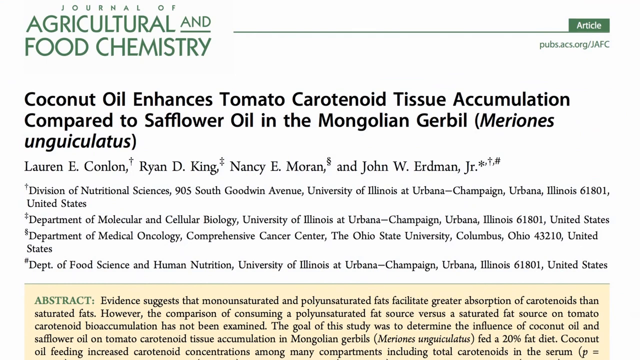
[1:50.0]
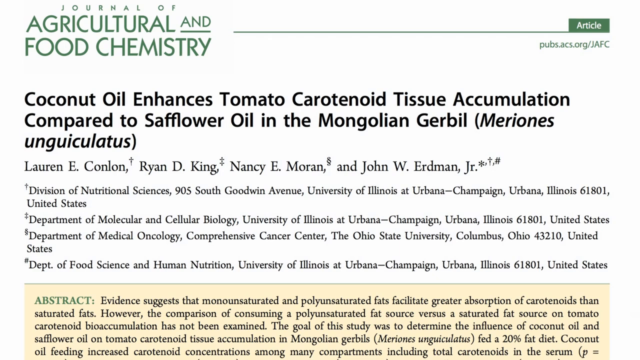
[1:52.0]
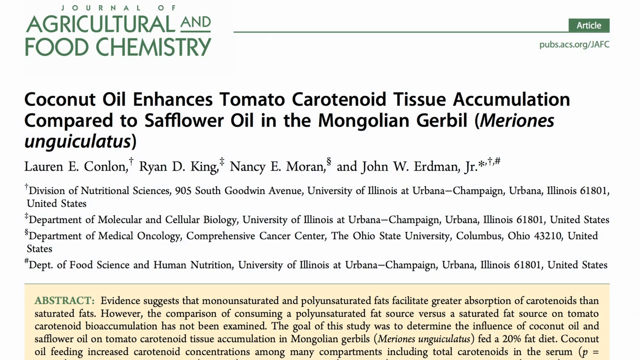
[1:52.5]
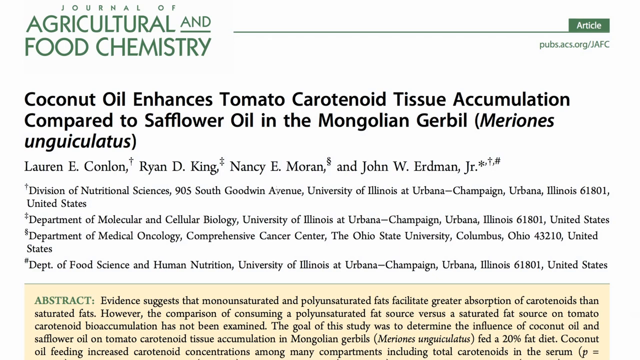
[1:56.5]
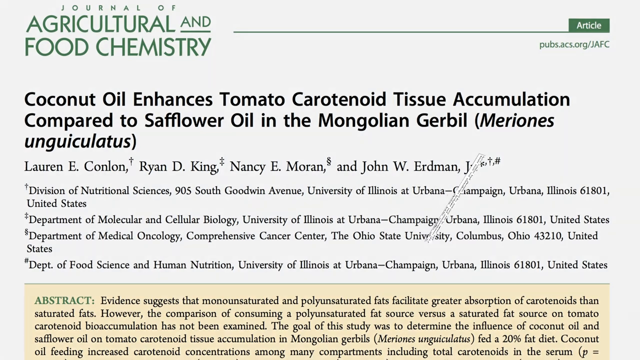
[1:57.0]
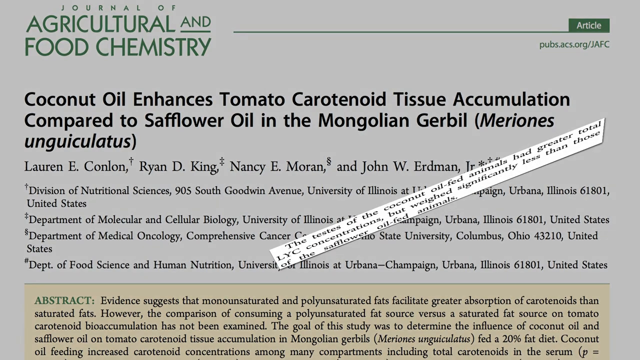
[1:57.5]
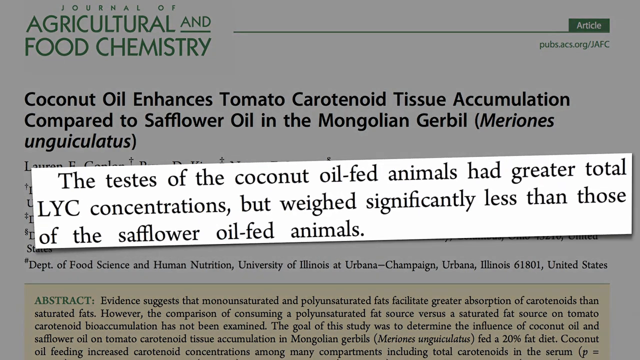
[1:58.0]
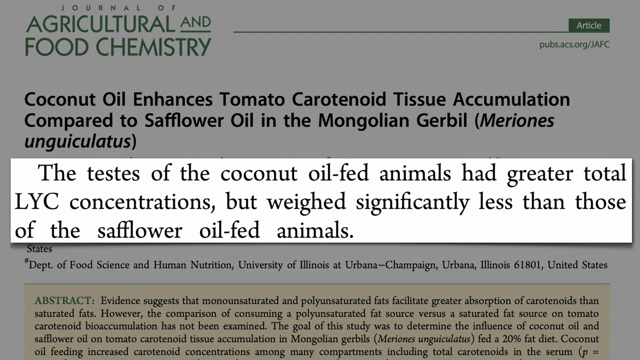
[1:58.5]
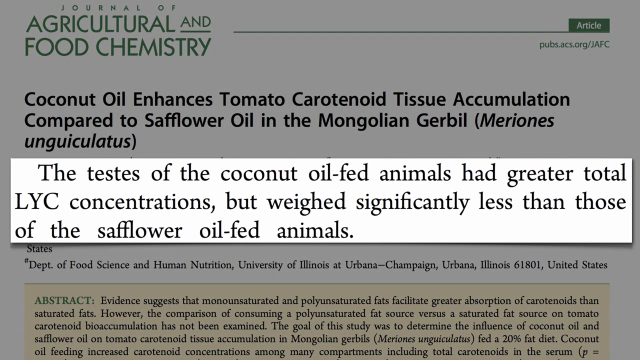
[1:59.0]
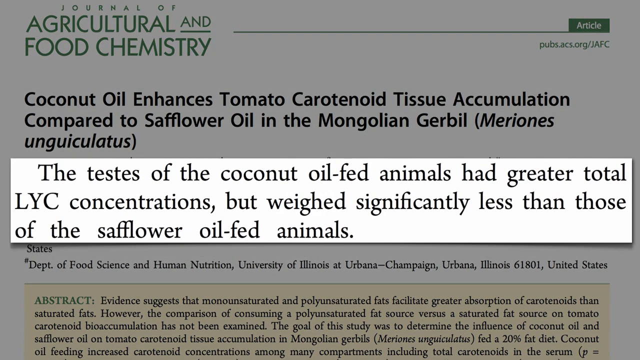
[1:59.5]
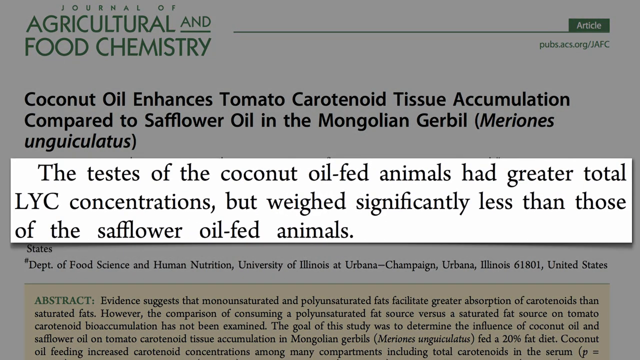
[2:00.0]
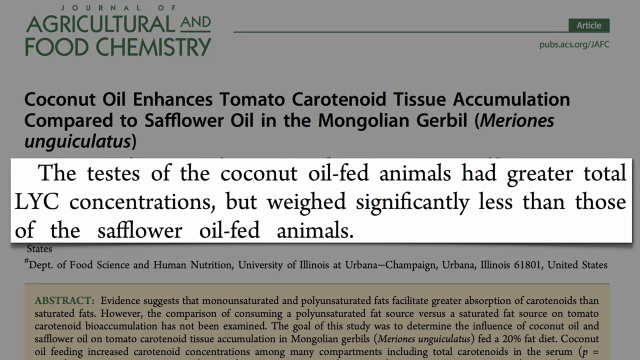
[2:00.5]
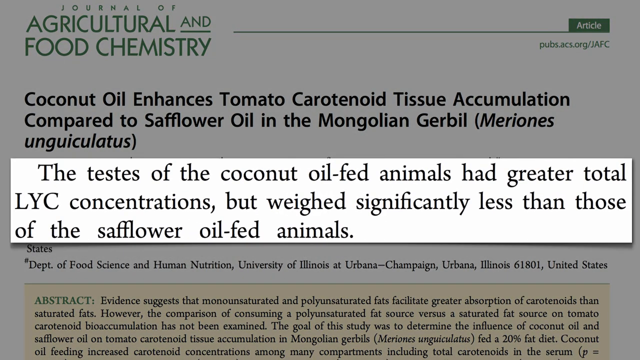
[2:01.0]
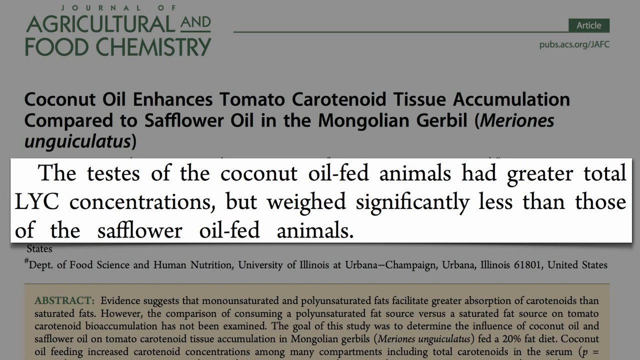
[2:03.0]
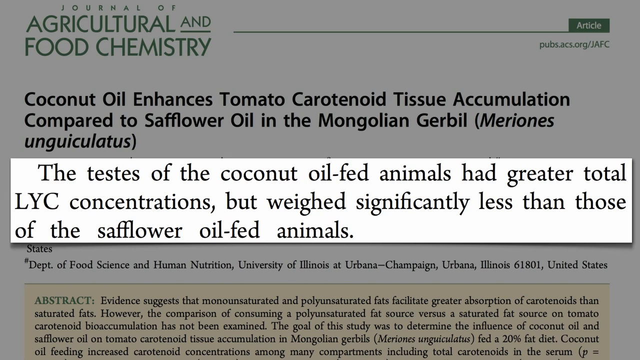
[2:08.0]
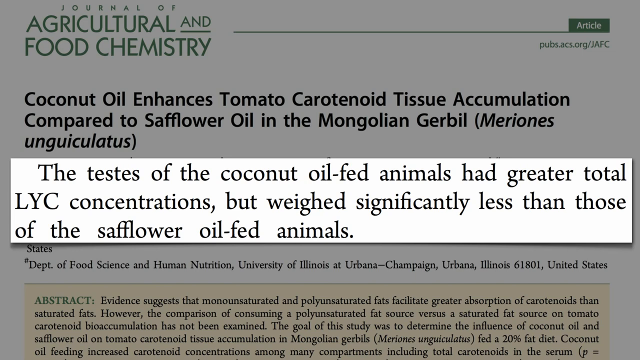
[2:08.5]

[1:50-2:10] A slide shows an article from the Journal of the Agricultural and Food Chemistry, with the journal logo at the very top left. Underneath is a bold heading, "coconut oil enhances tomato carotenoid tissue accumulation compared to safflower oil in the Mongolian gerbil", followed by a list of the researchers and a list of the departments and universities they are affiliated with. At the bottom of the screen is a yellow text box with the green word "abstract" and then black text reading "evidence suggests that monounsaturated and polyunsaturated fats facilitate greater absorption of carotenoids than saturated fats. However, the comparison of consuming a polyunsaturated fat source versus a saturated fat source on tomato carotenoid bioaccumulation has not been examined. The goal of this study was to determine the influence of coconut oil and safflower oil on tomato carotenoid tissue accumulation in Mongolian gerbils who have been fed a 20% fat diet." The text then disappears off the screen.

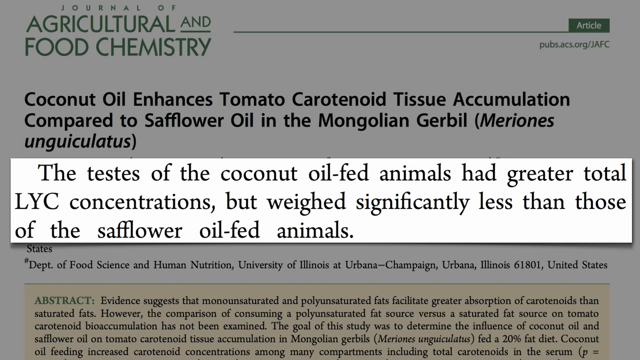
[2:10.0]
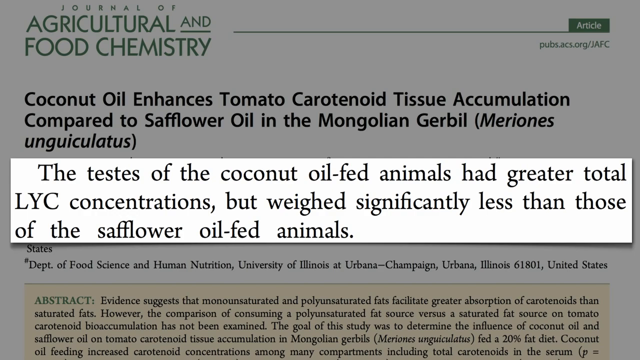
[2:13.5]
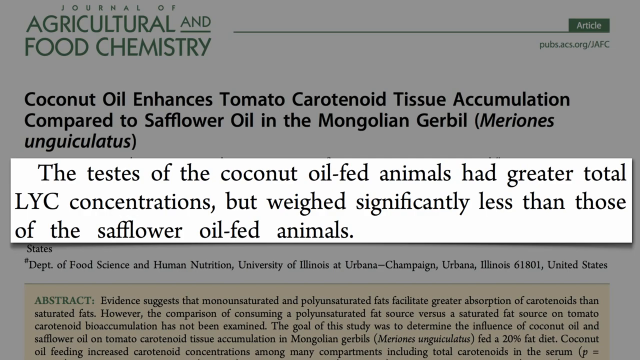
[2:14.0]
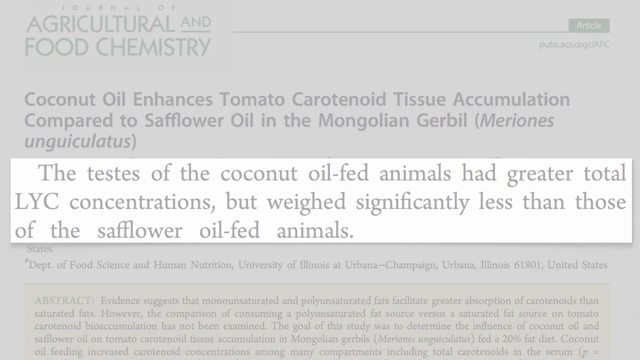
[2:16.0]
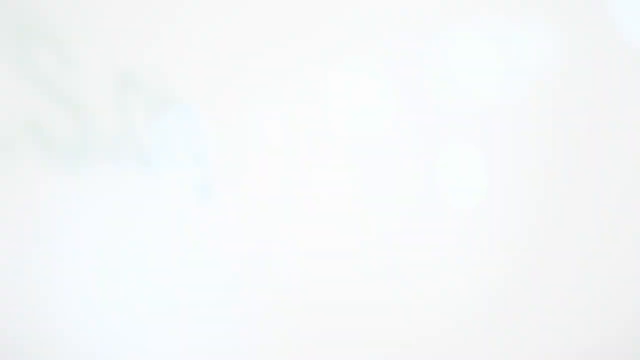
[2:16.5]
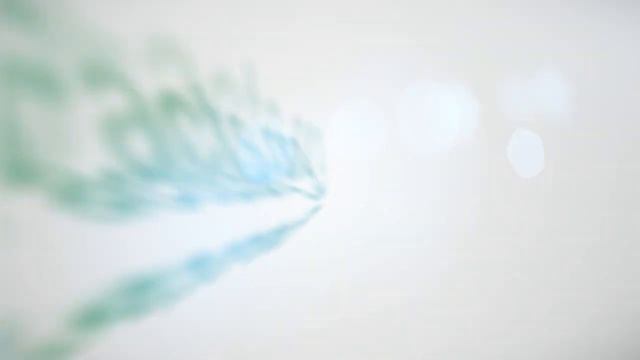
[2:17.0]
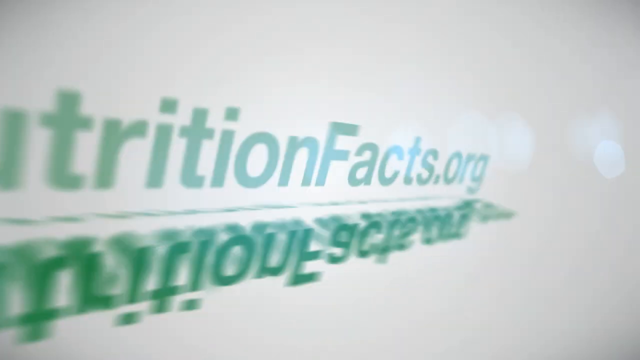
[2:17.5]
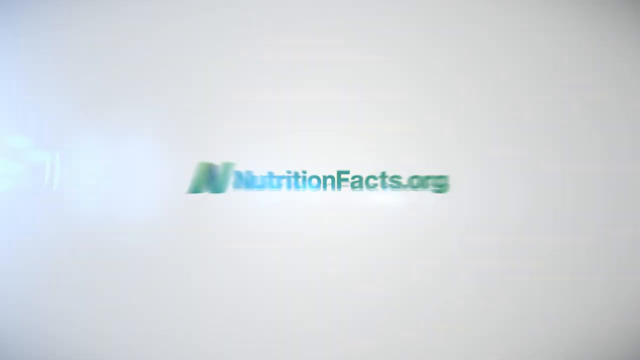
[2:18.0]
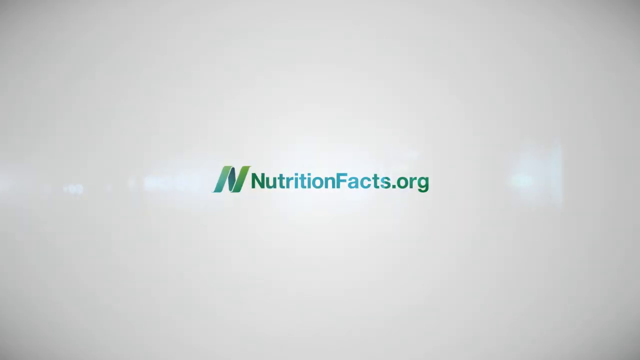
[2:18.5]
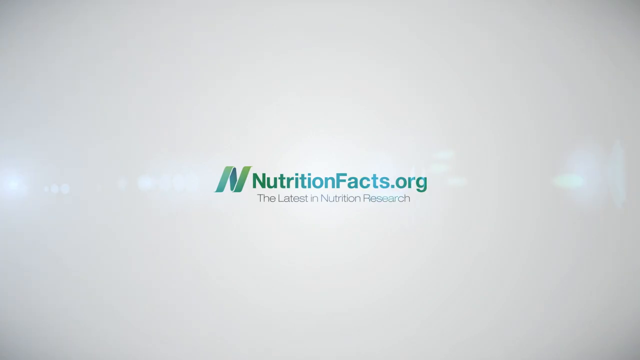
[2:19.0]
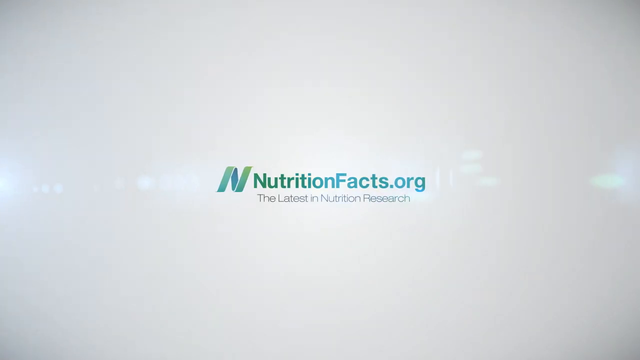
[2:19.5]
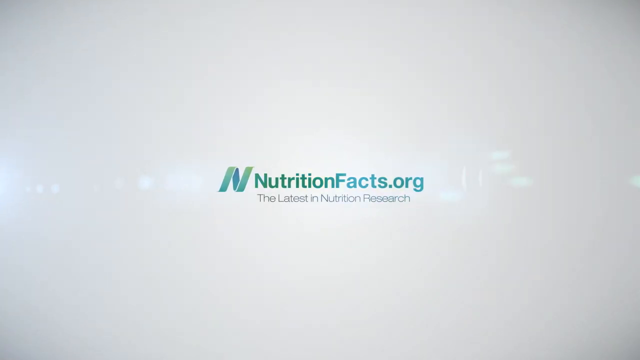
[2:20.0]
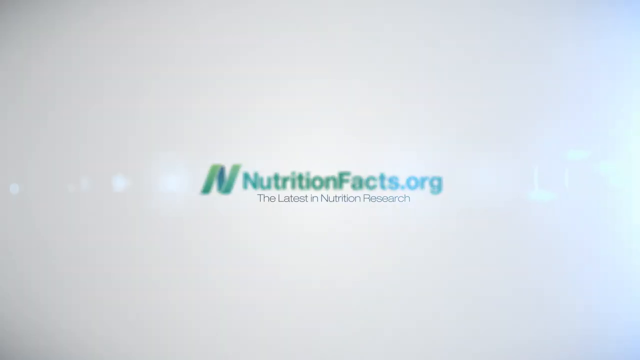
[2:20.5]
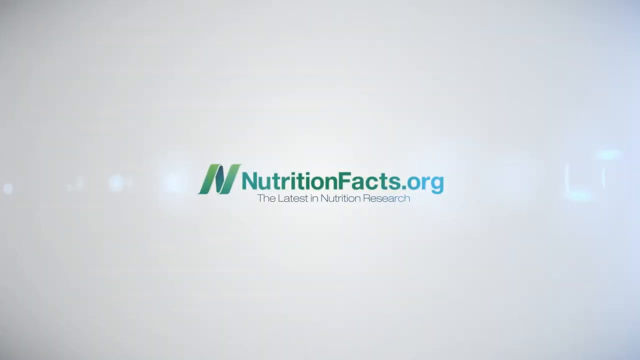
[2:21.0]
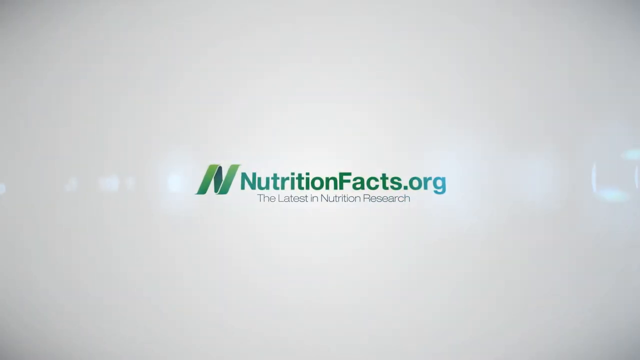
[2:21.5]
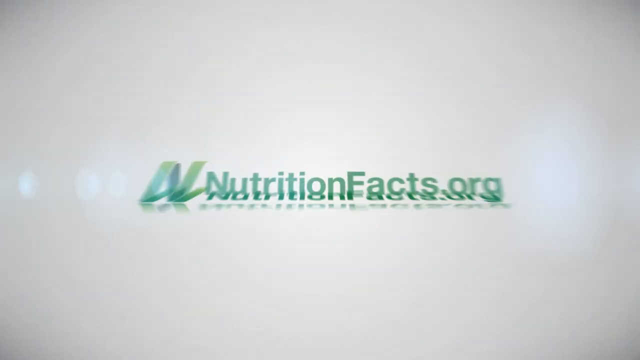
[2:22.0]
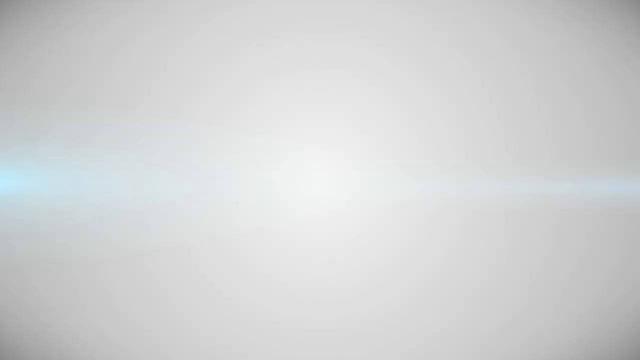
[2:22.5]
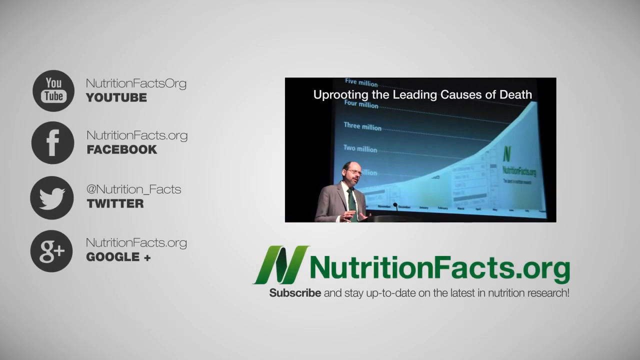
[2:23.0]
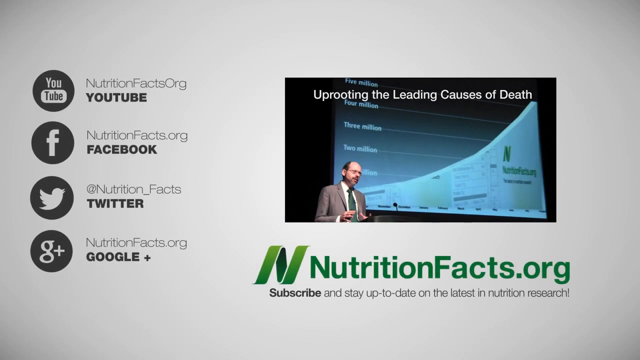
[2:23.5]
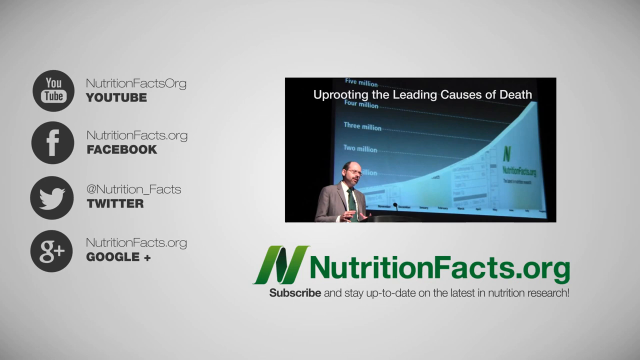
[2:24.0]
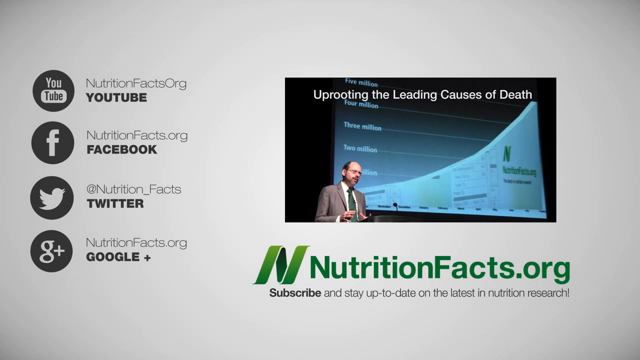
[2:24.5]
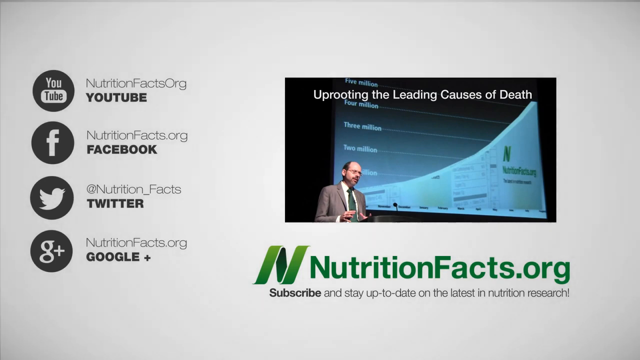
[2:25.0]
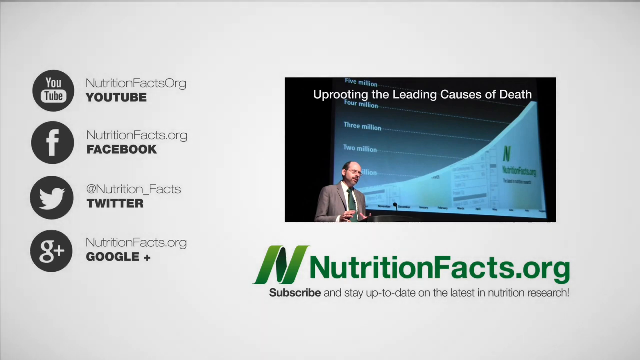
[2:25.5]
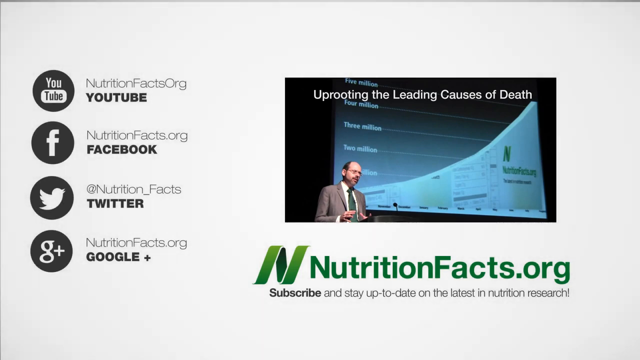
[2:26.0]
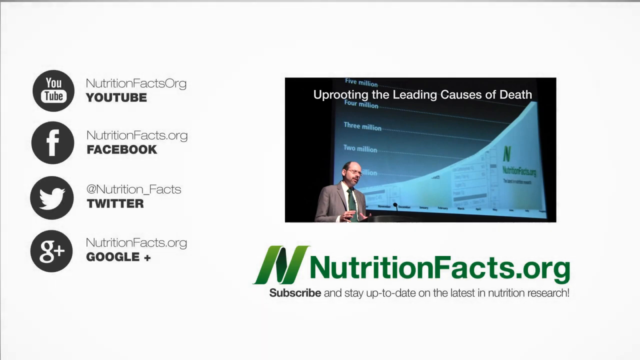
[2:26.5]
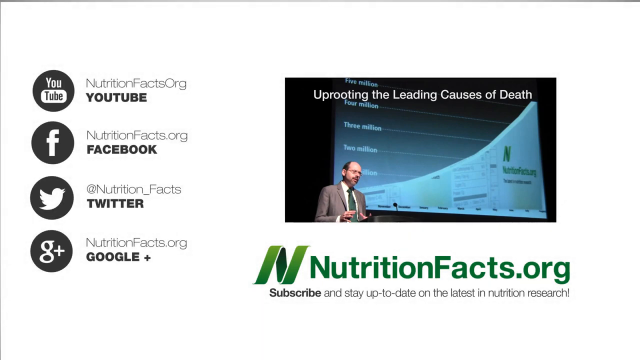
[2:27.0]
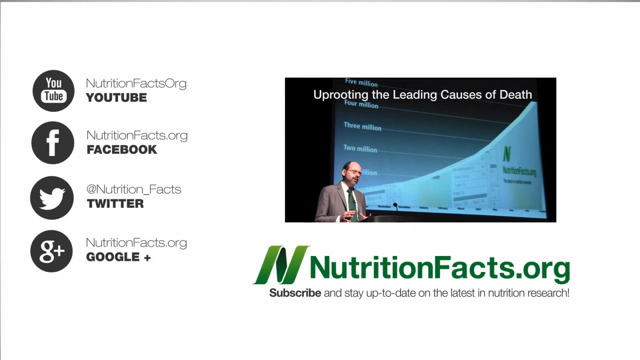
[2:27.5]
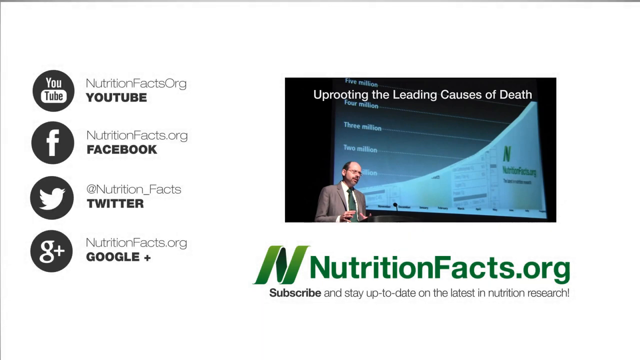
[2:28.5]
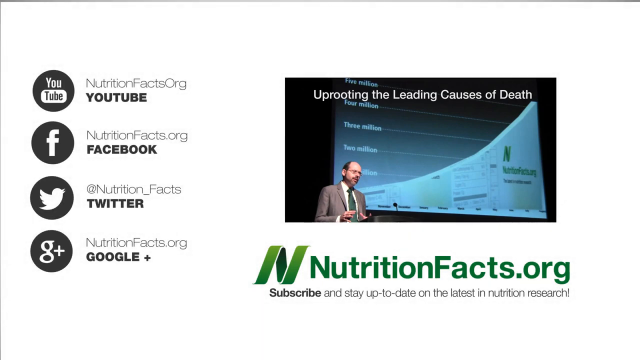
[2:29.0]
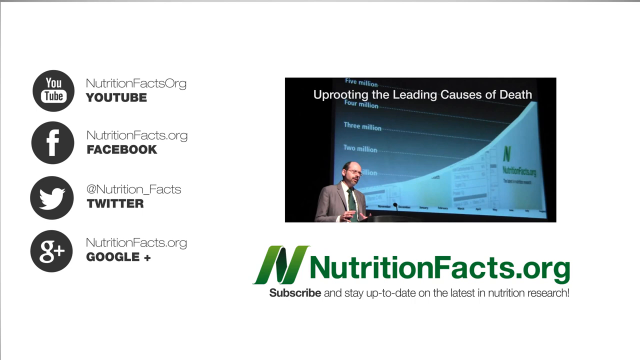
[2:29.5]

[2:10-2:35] In the top left corner of a slide is a text logo reading "Journal of Agricultural and Food Chemistry". A green line goes towards the right side, ending in a green text box with white text reading "article", and underneath is the web address "pubs.acs.org". The title of the article, in black bold font, reads "coconut oil enhances tomato carotenoid tissue accumulation compared to safflower oil in the Mongolian gerbil", followed by the Latin name for the Mongolian gerbil in brackets. A white text box comes over the top of the slide, reading "the tests of the coconut oil fed animals had greater total LYC concentrations but weighed significantly less than those of the safflower oil fed animals". The slide then increases in brightness until all the text is gone and the screen is white. Green text rolls in from the left, kind of like a mirror image, forming the logo "nutritionfacts.org" with the tagline "the latest in nutrition research" underneath. The logo kind of increases in size and spins towards the viewer before the final slide appears. On its left is a list of YouTube, Facebook, Twitter and Google addresses, each with the relevant social icon to the left; on the right is an image of a man and a graph with the title "uprooting the leading causes of death". In the bottom right corner is the nutritionfacts.org logo, with text underneath reading "subscribe and stay up to date in the latest of nutrition research".